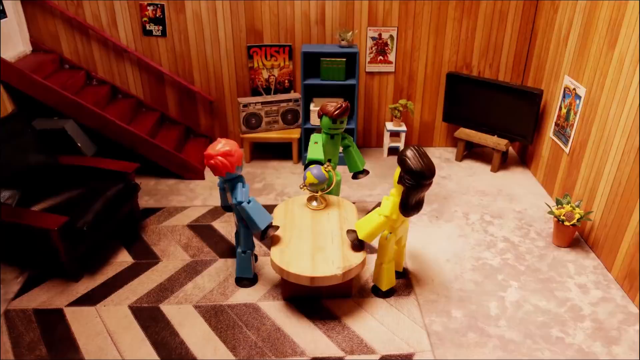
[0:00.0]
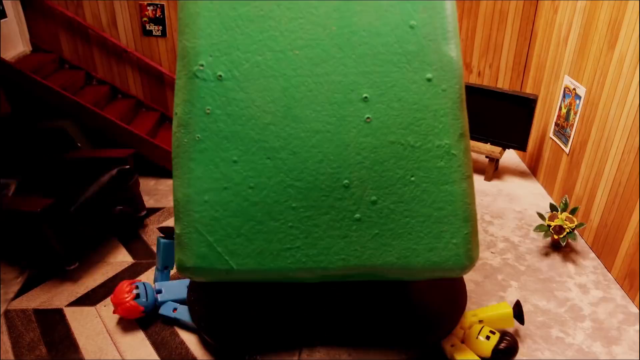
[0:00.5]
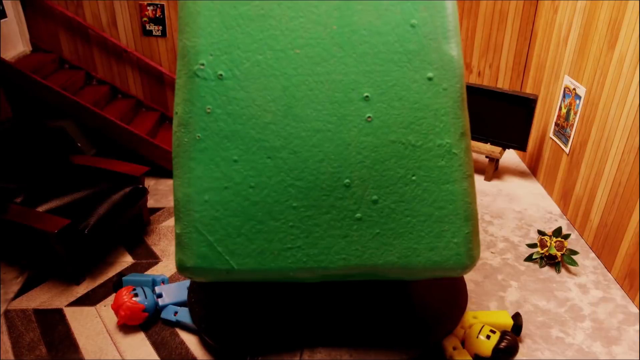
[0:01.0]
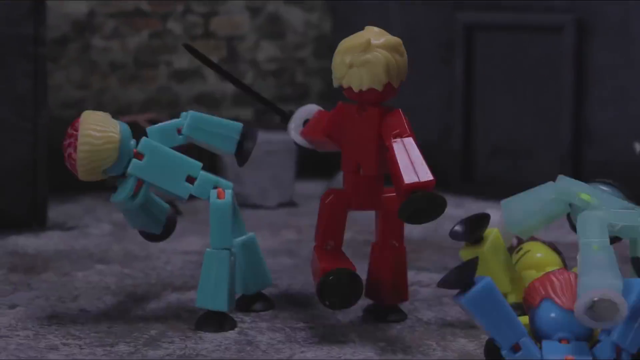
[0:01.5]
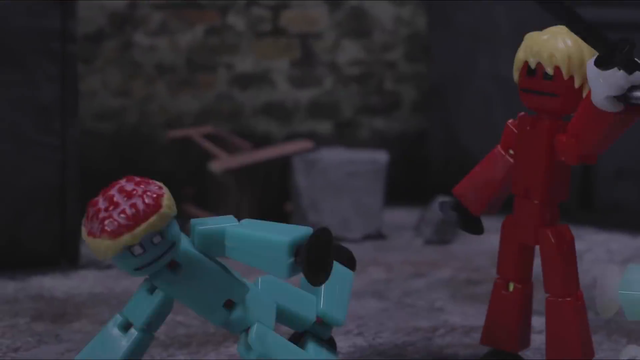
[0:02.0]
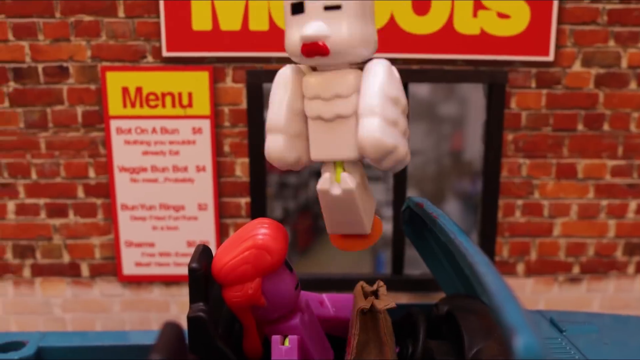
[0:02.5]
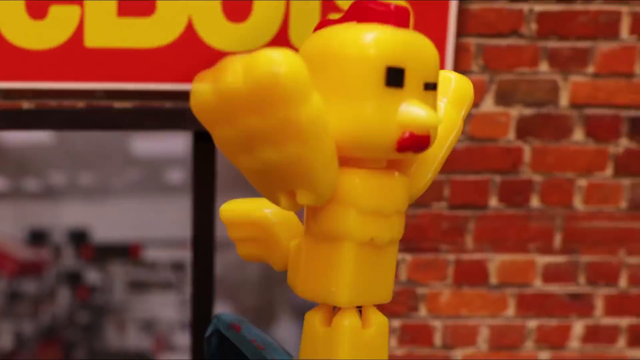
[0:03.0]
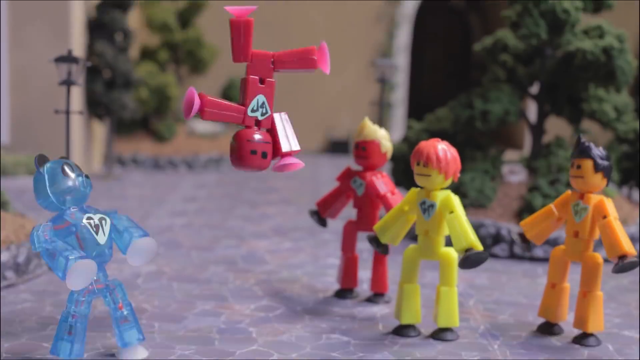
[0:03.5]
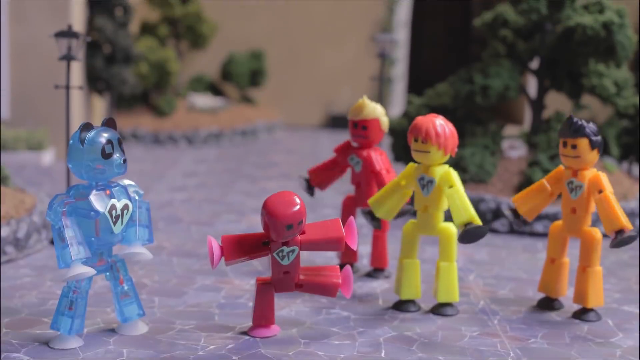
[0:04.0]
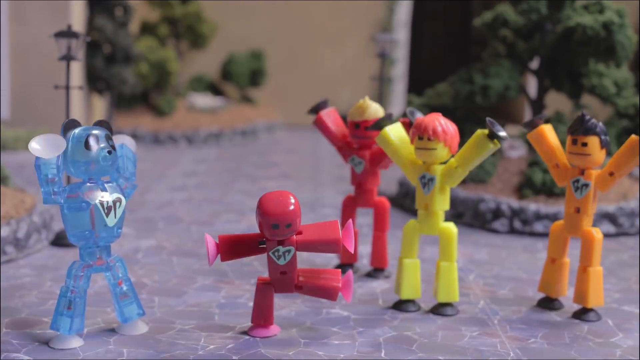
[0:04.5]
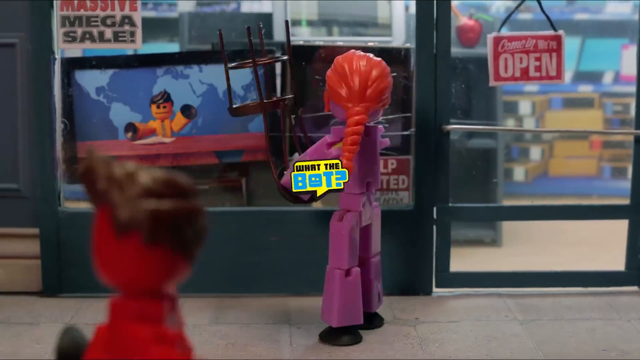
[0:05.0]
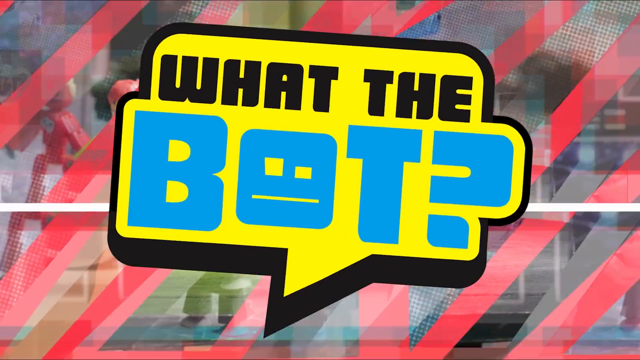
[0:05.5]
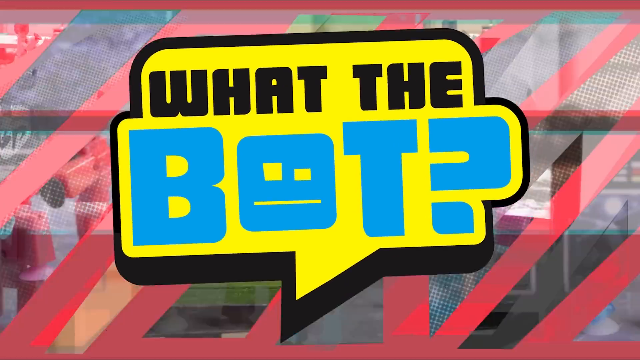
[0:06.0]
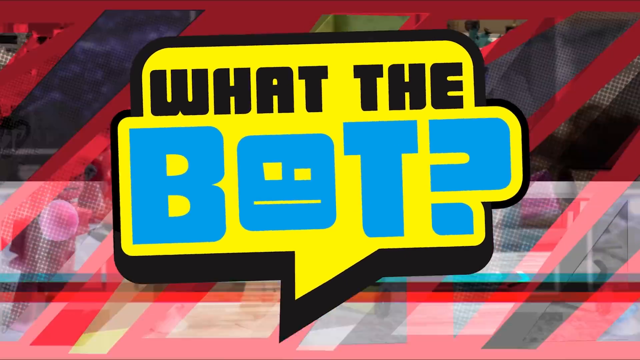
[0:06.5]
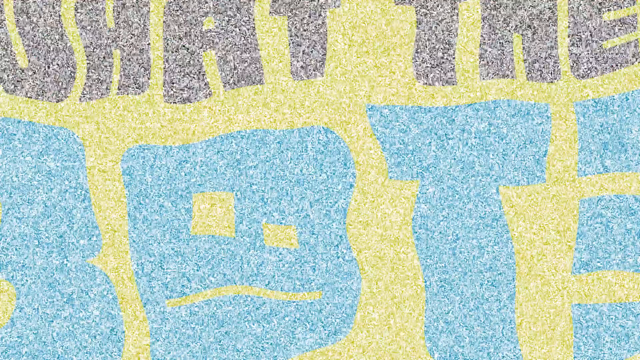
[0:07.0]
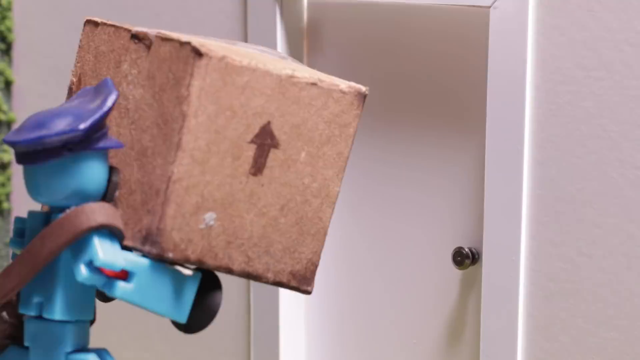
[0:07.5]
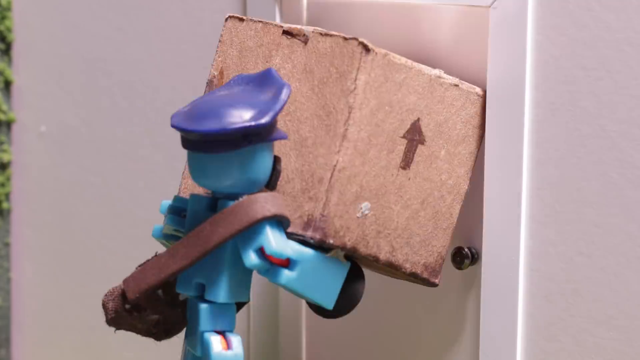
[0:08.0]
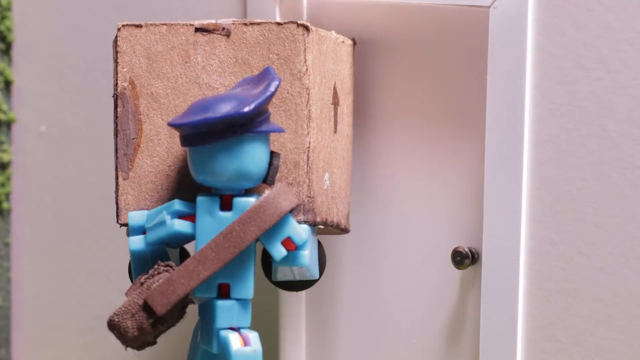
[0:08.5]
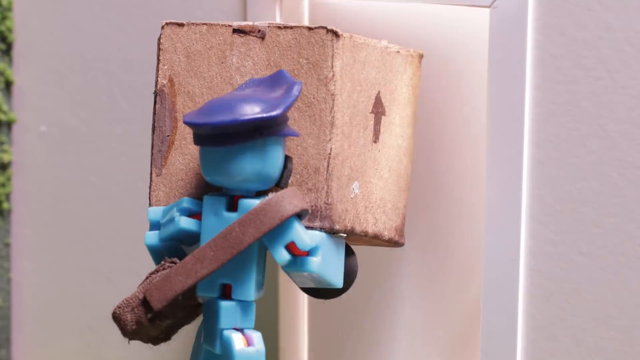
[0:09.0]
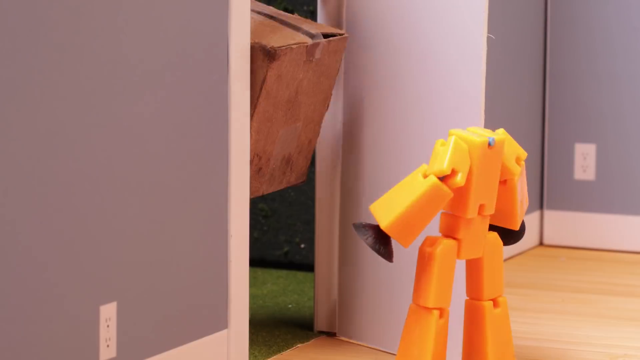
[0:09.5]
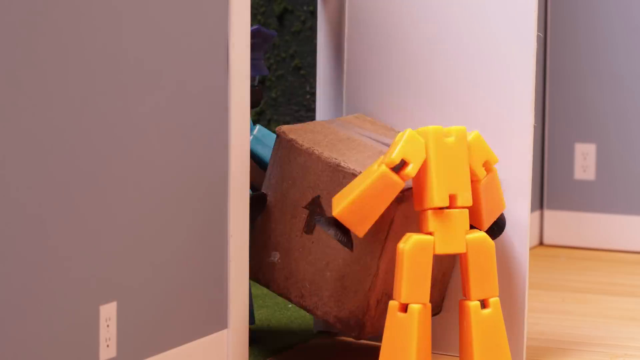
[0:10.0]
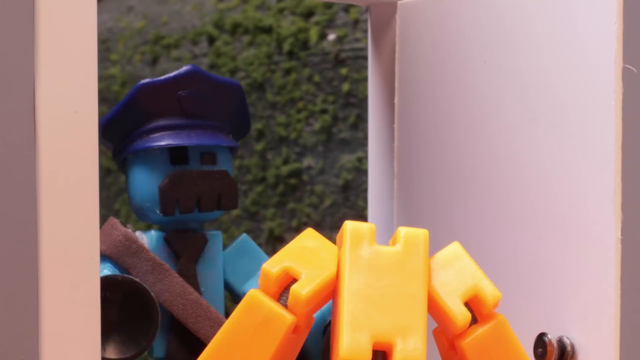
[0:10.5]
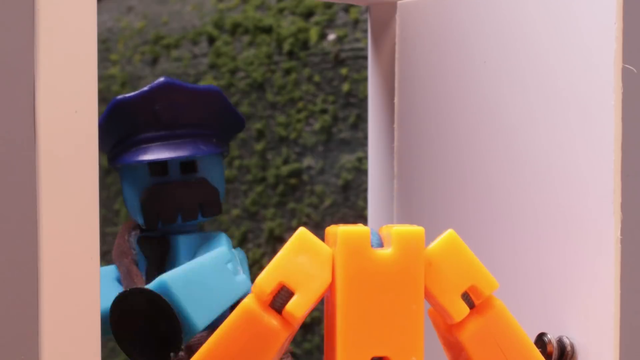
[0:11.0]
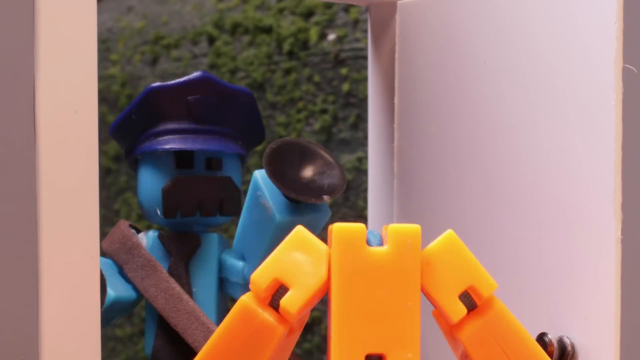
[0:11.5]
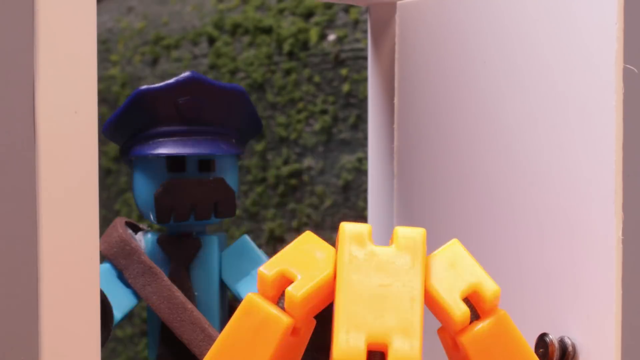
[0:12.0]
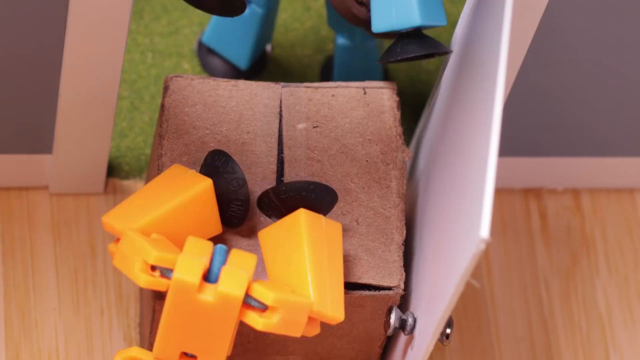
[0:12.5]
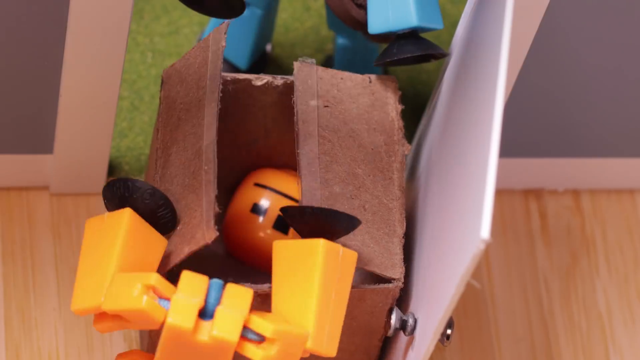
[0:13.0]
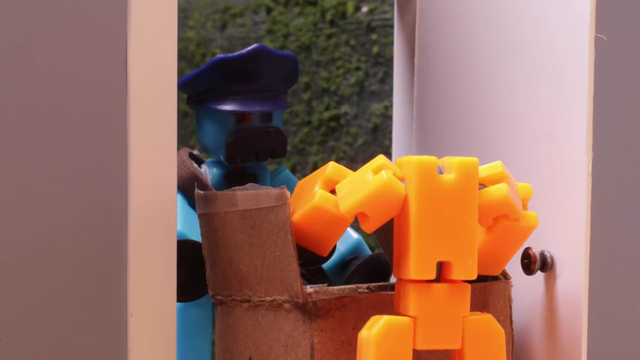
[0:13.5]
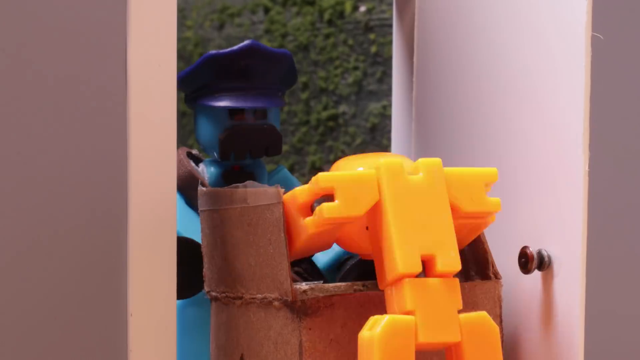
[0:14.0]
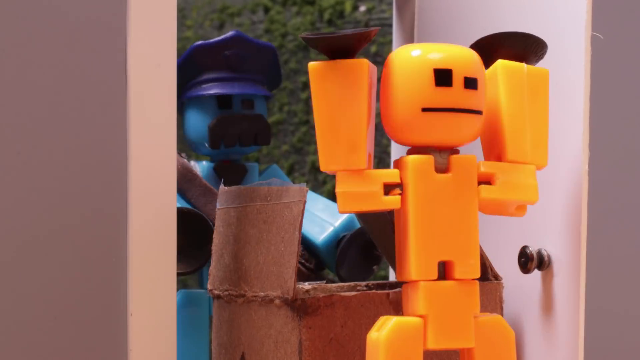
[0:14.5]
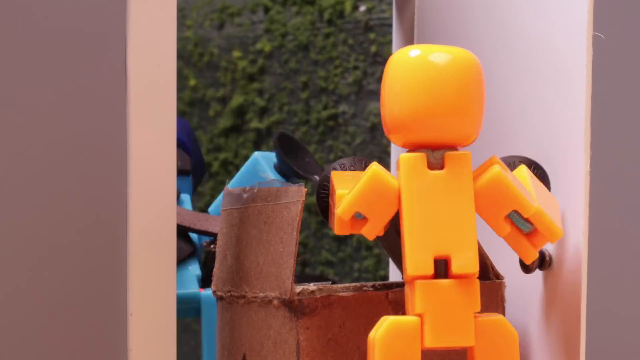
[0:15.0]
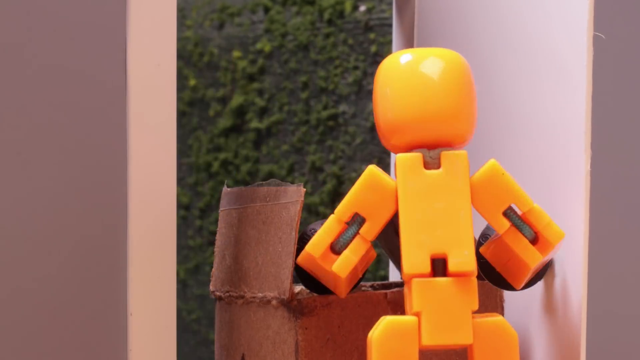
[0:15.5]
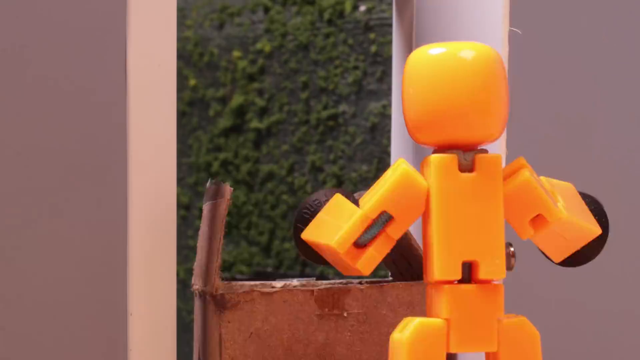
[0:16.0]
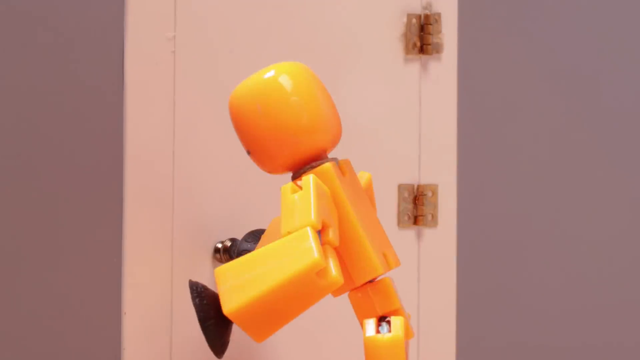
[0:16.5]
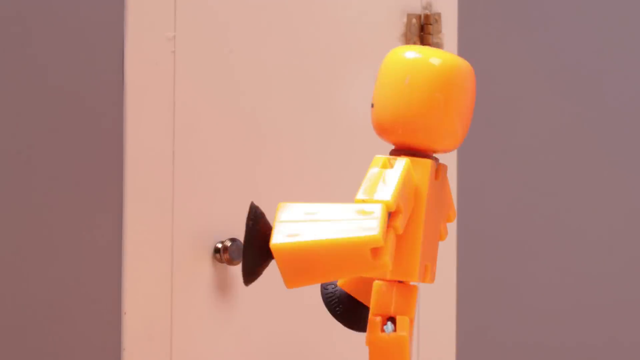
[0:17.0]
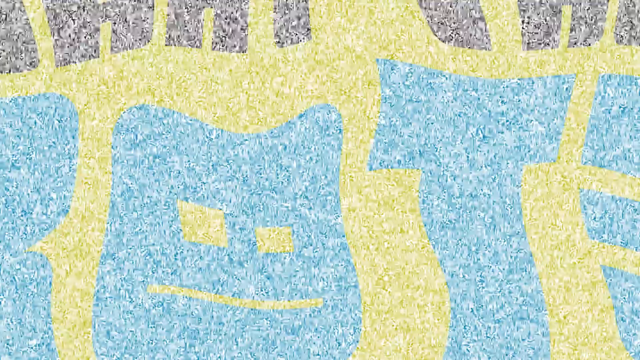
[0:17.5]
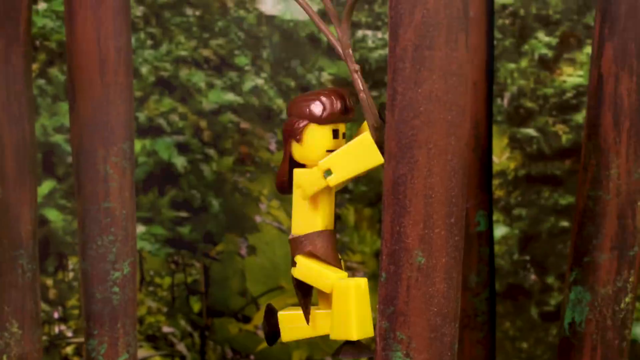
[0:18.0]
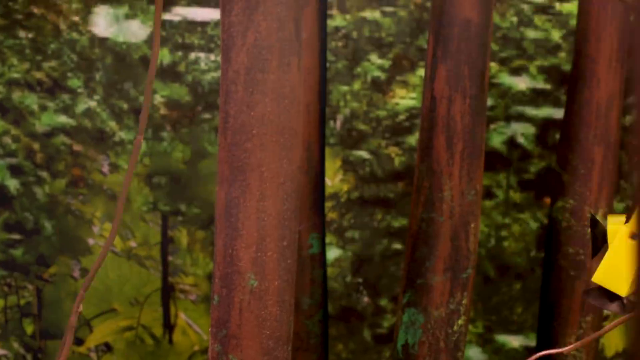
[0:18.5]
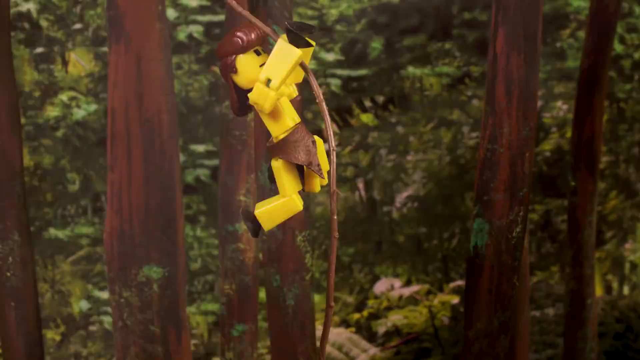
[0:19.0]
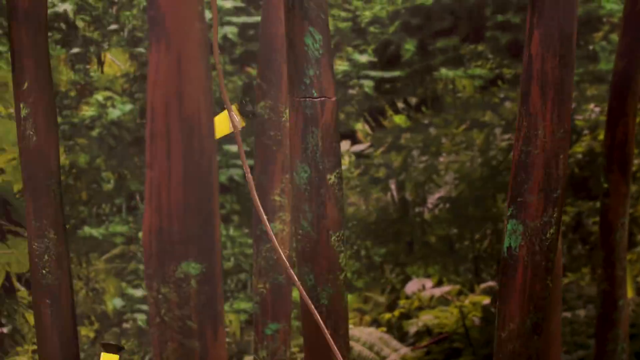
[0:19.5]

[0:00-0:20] A stop motion animated show or film features little plastic figurines with movable joints. The setting changes about every two seconds, as the opening is made of multiple very quick individual clips. First, a big green box falls into the middle of a living room, causing the people in the living room to fall to the floor. It then changes to figurines jumping around and performing actions. In one clip, a blue figurine with a mustache and a hat delivers a cardboard box; the person opens the door and is a figurine without a head, and the postman looks quite surprised. The person in the house opens the box and puts on the head, which causes the postman to fall to the floor in amazement or fear.